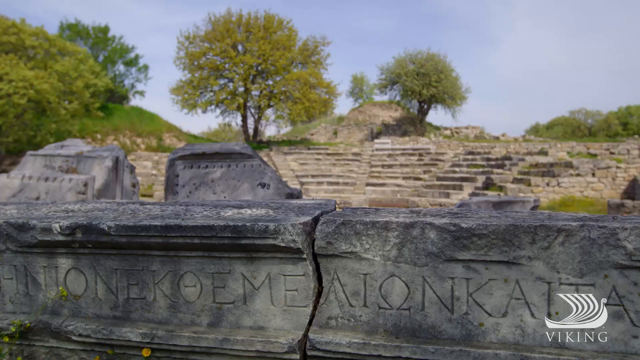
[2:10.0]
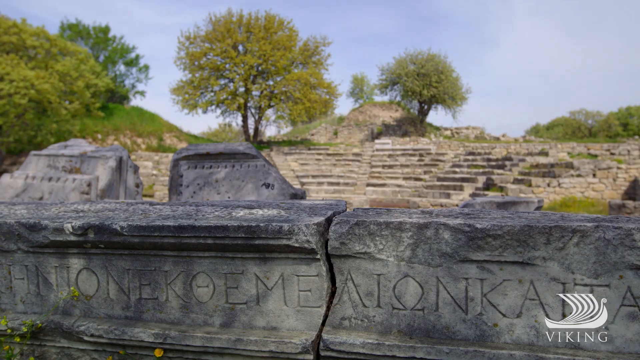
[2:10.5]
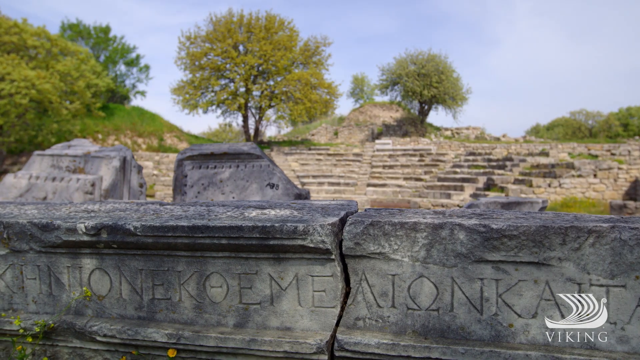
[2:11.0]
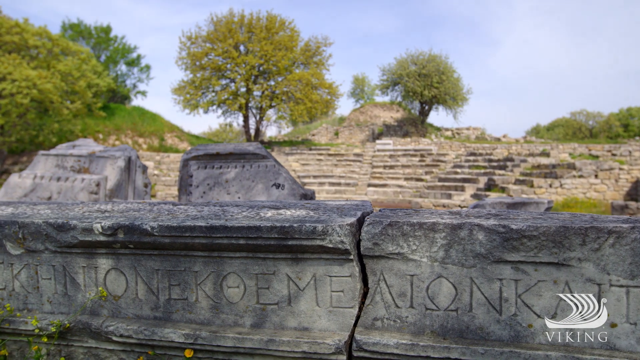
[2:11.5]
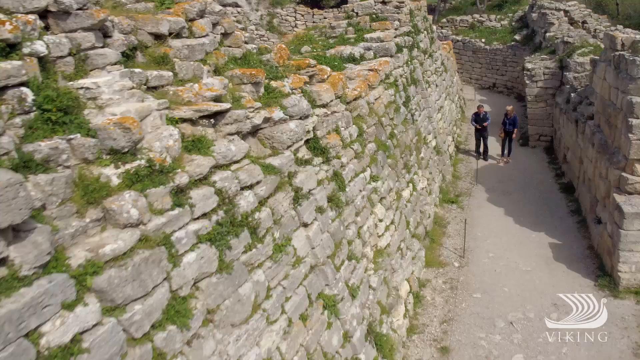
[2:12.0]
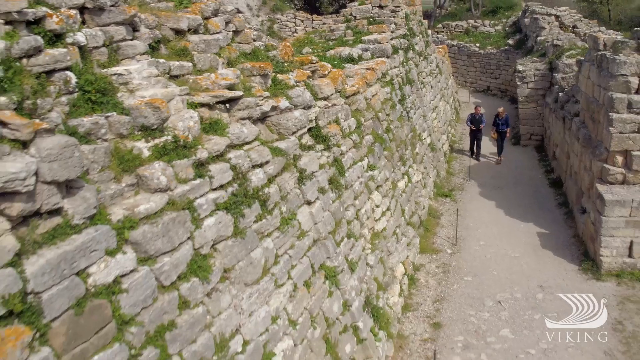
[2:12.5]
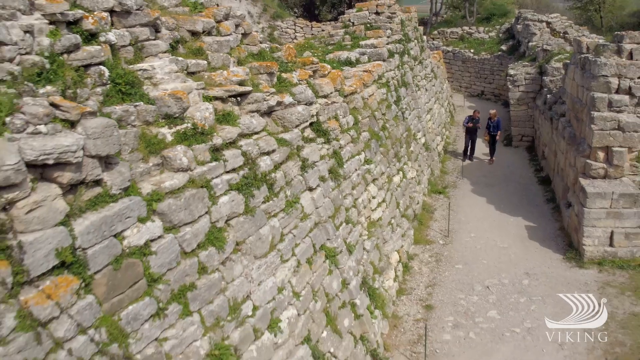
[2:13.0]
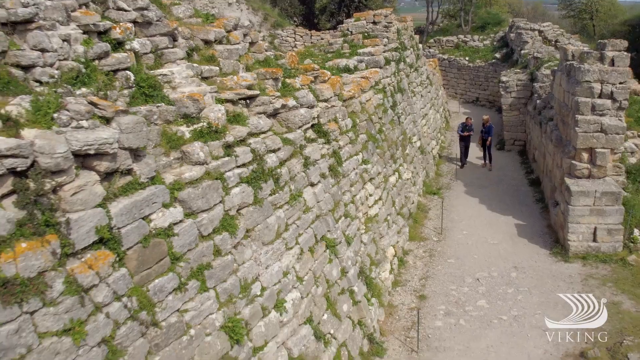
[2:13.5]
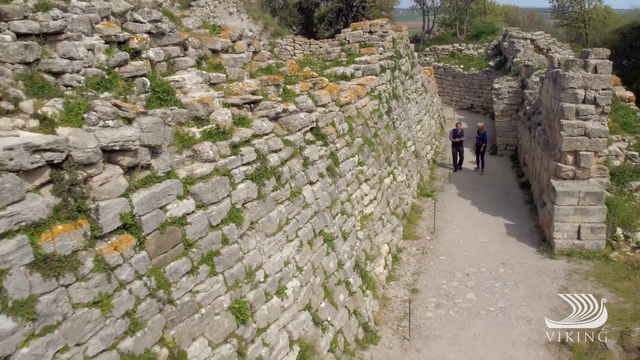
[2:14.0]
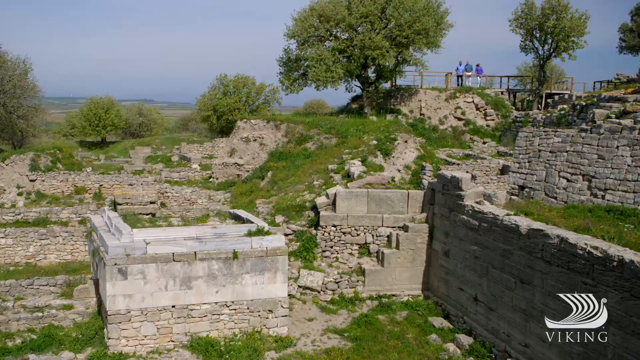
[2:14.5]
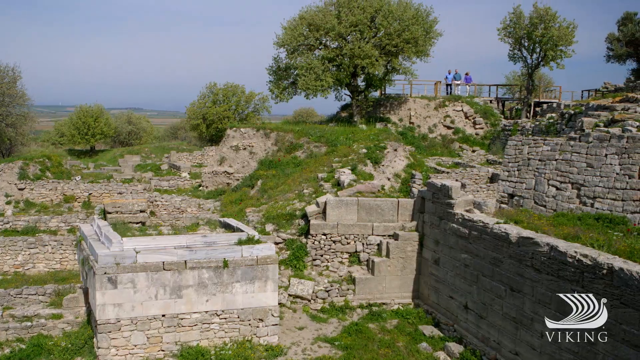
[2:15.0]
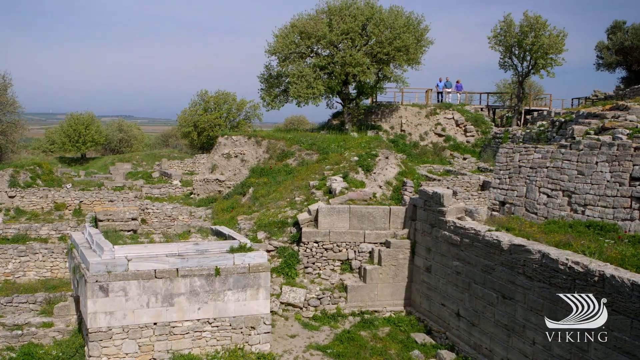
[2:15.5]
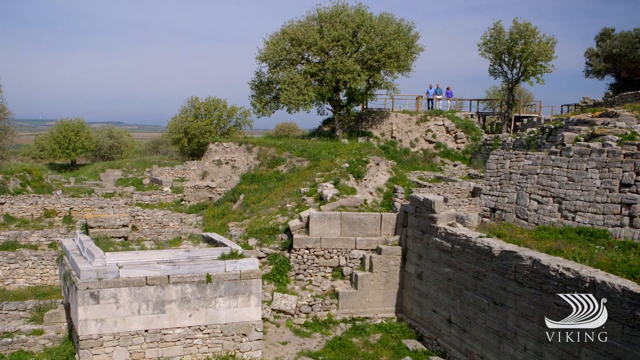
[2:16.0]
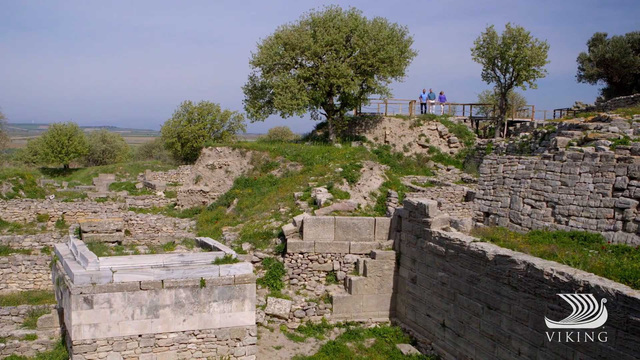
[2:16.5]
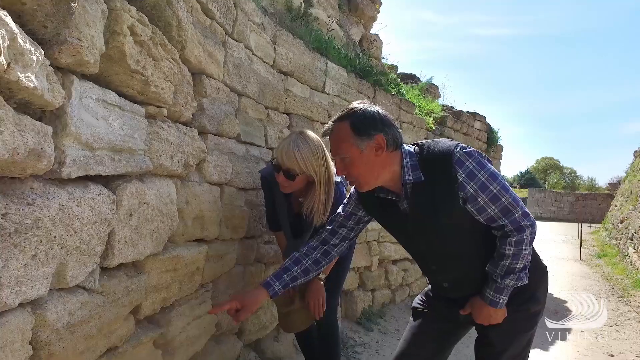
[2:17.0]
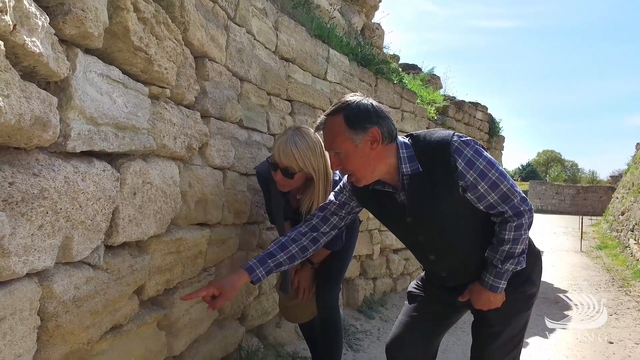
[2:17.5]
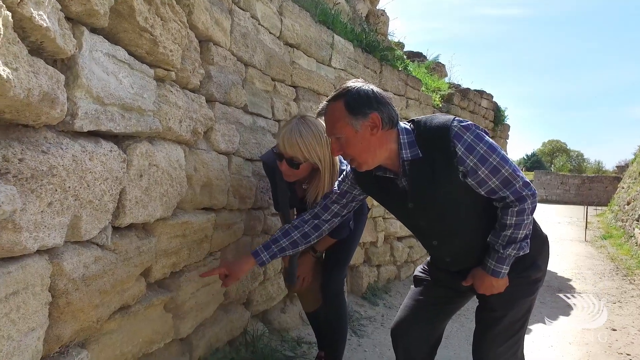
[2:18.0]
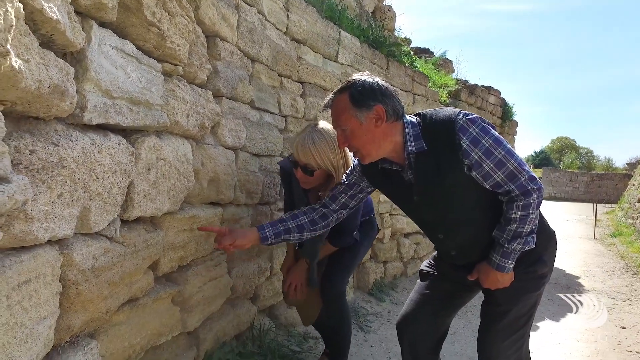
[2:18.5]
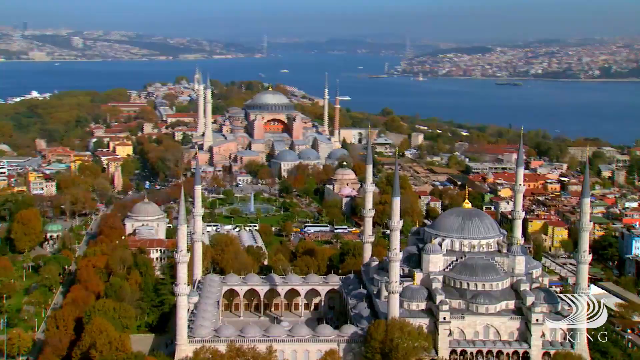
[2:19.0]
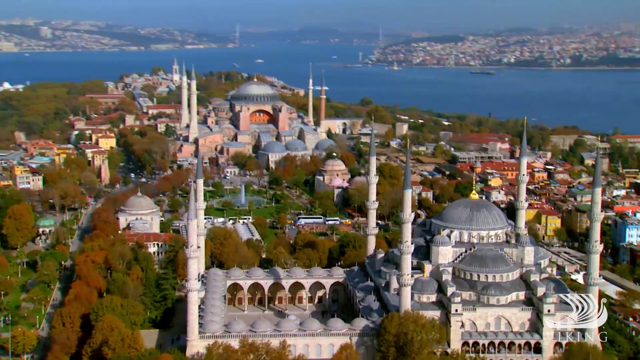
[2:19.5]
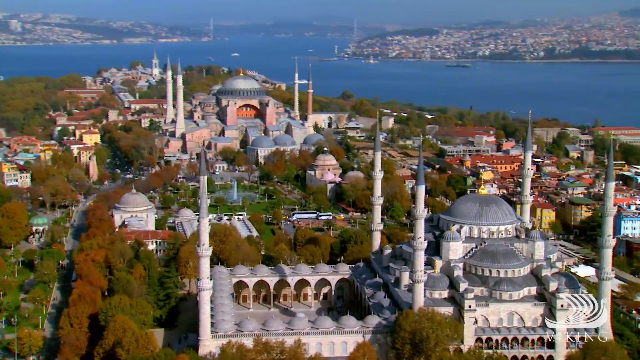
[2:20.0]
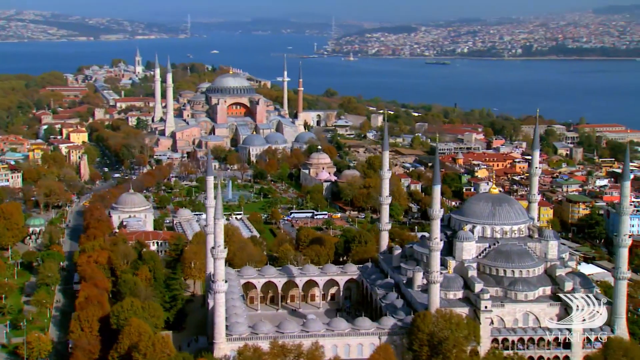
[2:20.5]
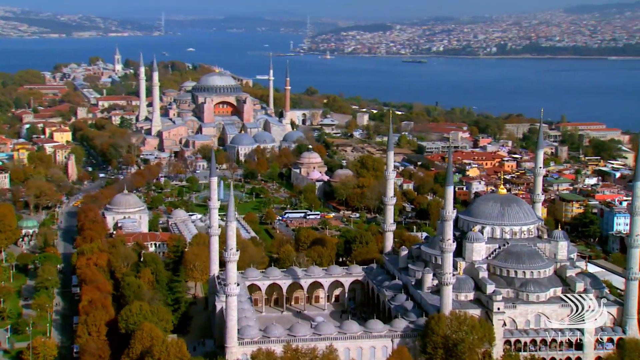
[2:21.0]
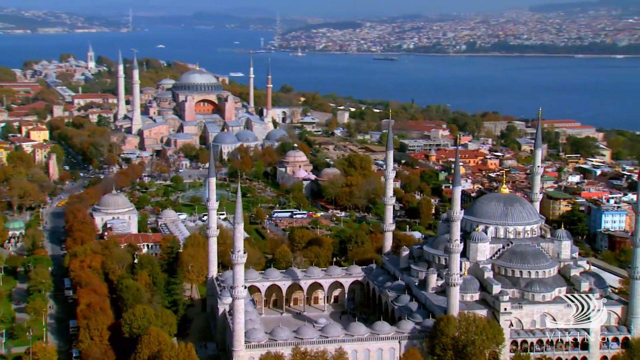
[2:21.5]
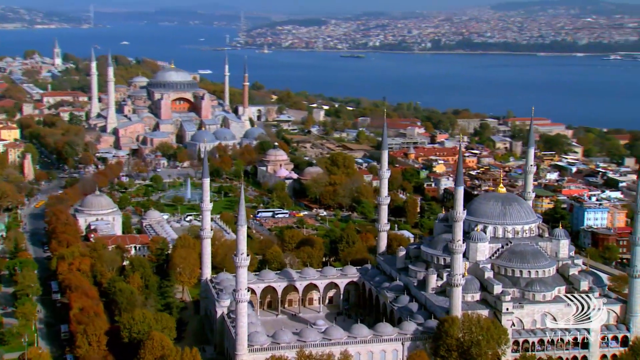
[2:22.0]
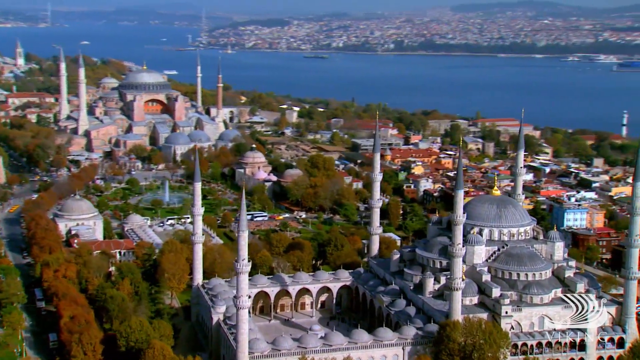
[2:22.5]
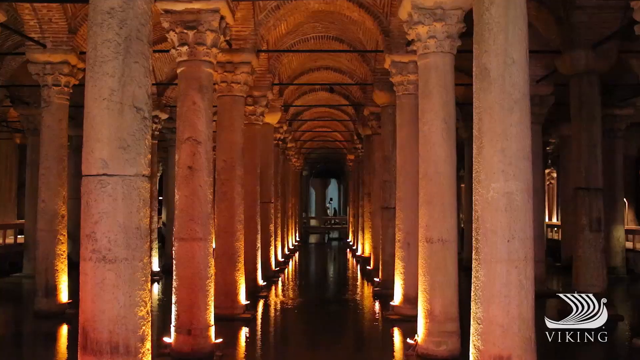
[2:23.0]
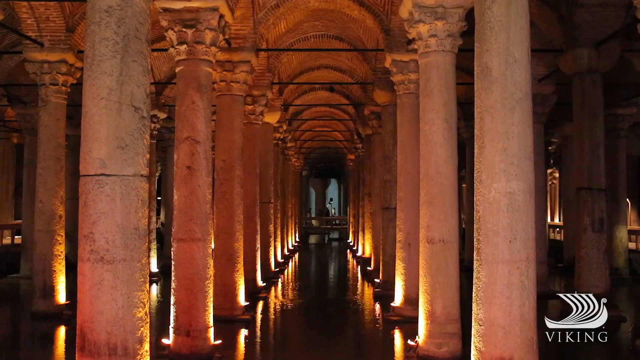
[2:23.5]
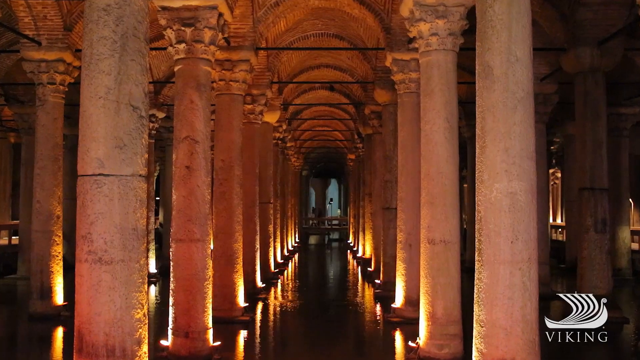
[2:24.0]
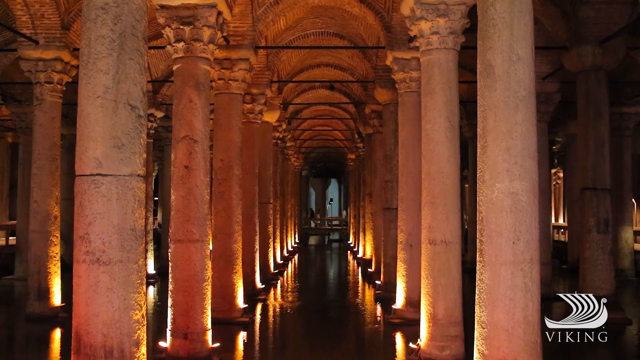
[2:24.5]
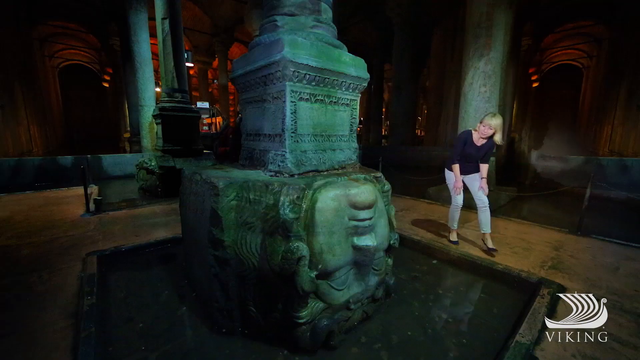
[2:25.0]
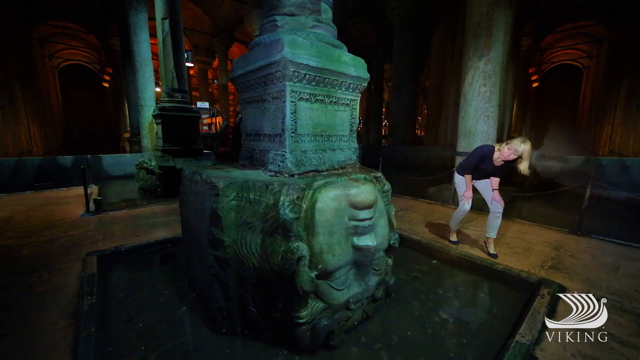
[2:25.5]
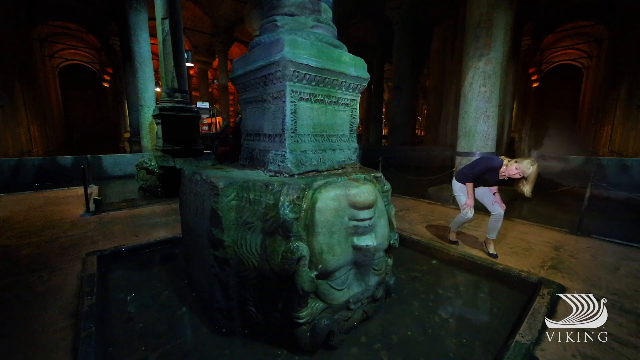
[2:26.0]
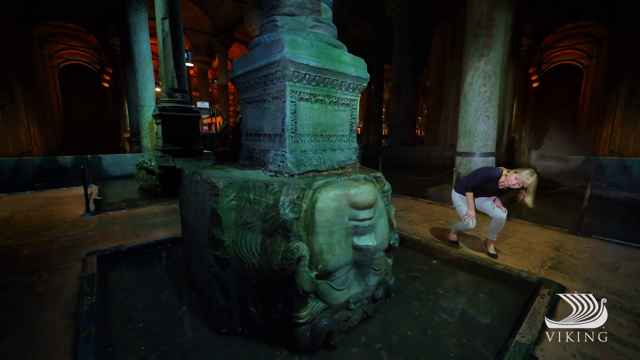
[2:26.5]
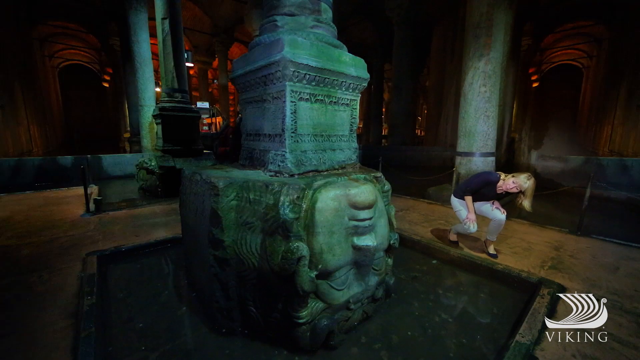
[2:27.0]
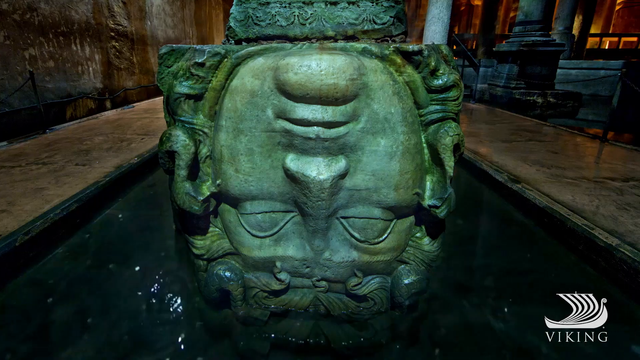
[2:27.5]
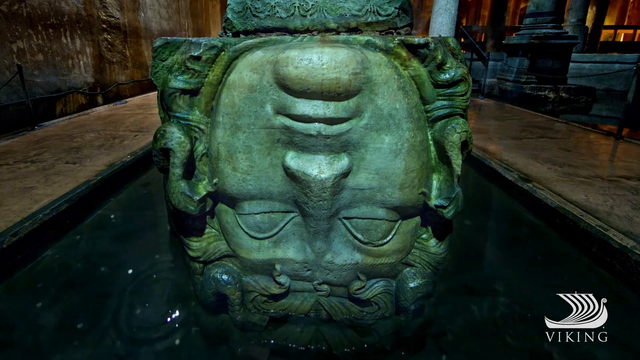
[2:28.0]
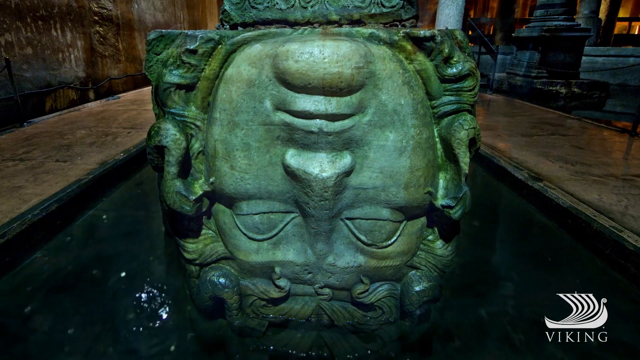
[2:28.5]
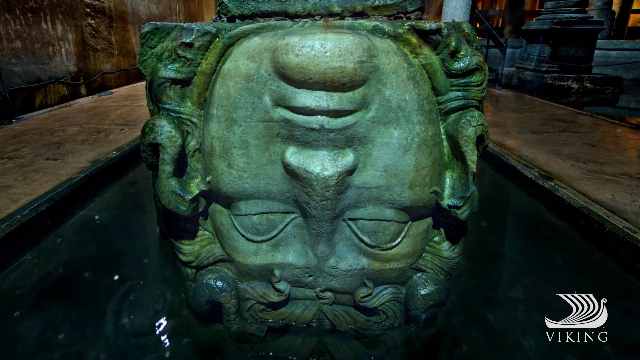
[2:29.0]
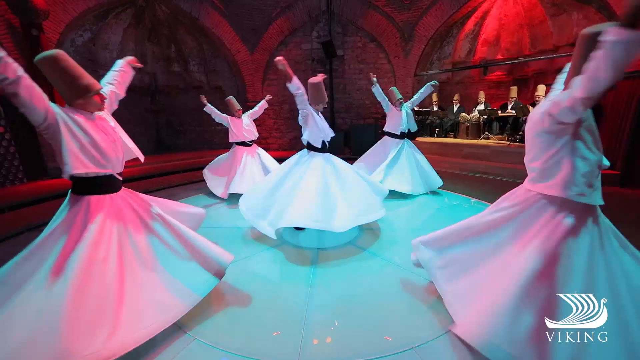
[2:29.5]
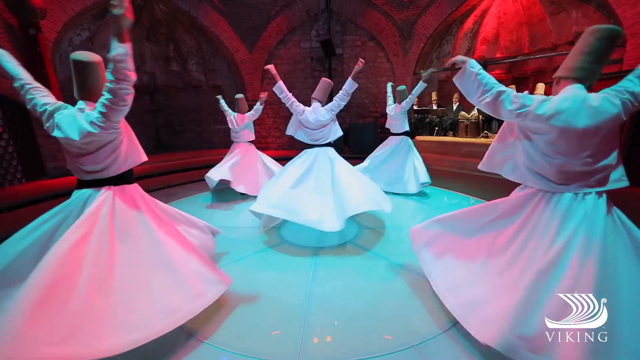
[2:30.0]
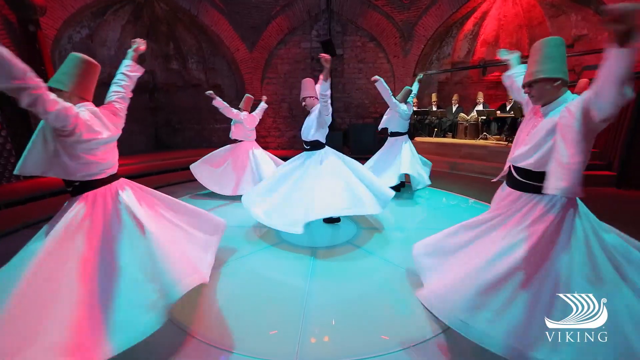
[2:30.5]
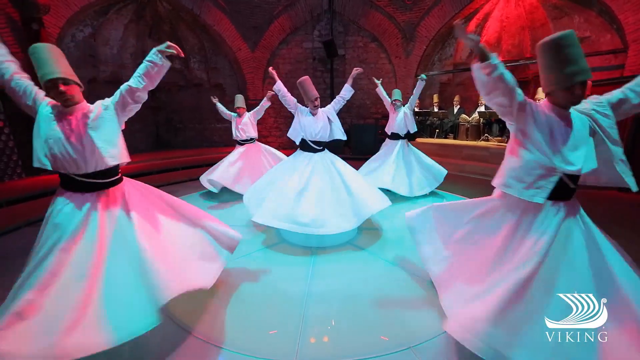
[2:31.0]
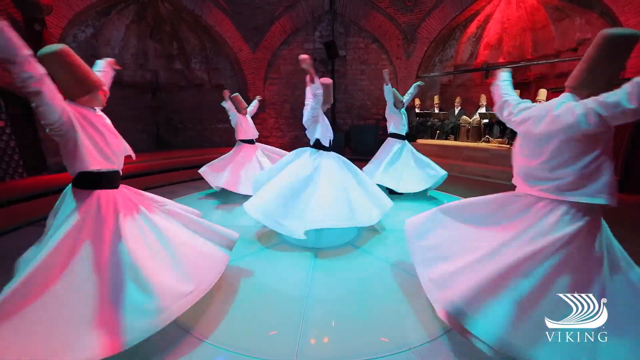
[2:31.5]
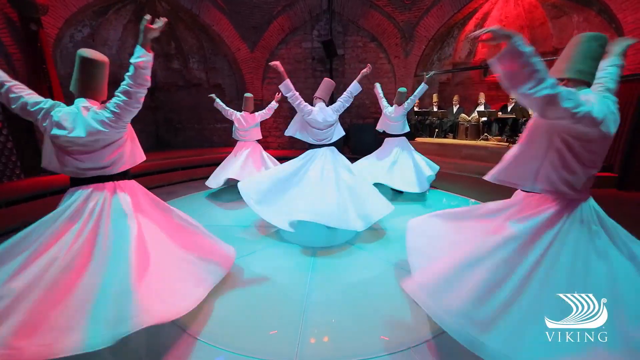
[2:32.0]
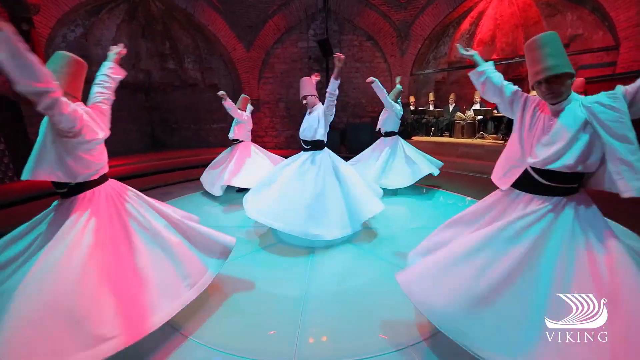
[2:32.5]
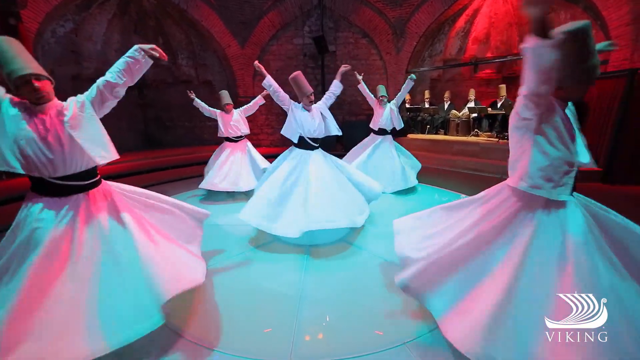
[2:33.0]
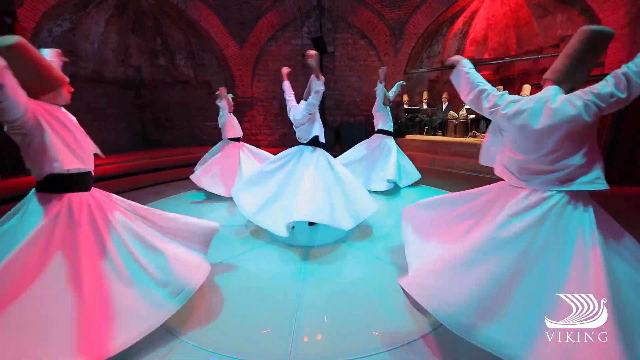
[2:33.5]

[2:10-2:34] The view moves from the stone monument to what looks like walking through an open tunnel with old bricks and stone on either side, through ruins, with two individuals walking through it. A different view, apparently of the same site, shows a couple of people behind a railing at the top of the image among some trees, with ruins in the foreground. Outdoors, a man in a vest and a blue and white plaid long-sleeve shirt points to something on a sand-colored brick wall while a woman with glasses and blonde hair crouches, looking at what he points at. An aerial view shows many buildings with domes and spires in a city, with an ocean in the background and many tall columns. The view then goes inside through a heavily columned hallway. What looks like the same blonde woman crouches to look at the base of something, apparently in a museum, where there is an upside-down head carved out of stone. Another view shows the face of that sculpture. Finally, five Turkish dancers, apparently male, dressed in white with big full skirts, long-sleeved white shirts and tall brown fez hats, hold their hands up above them and twirl in a circle.